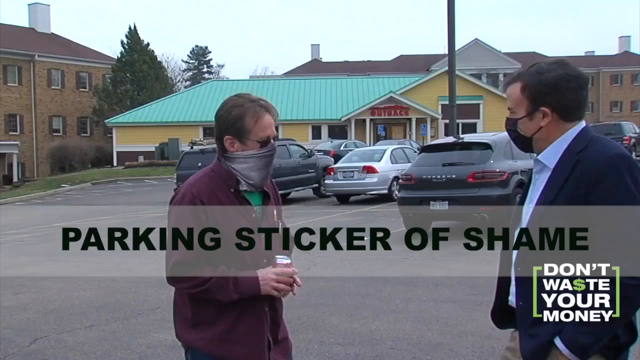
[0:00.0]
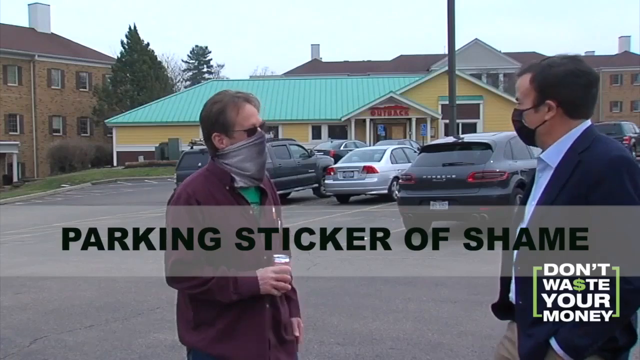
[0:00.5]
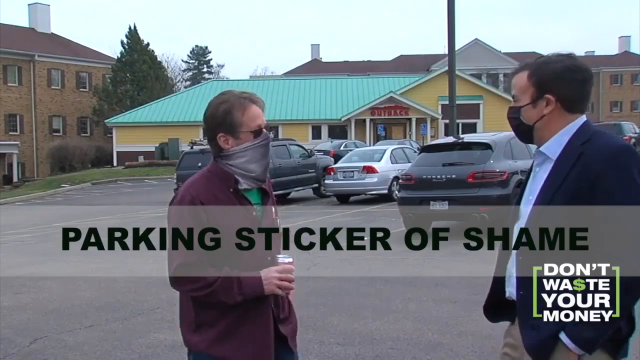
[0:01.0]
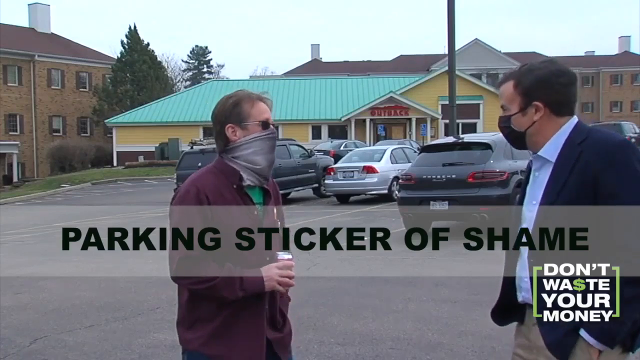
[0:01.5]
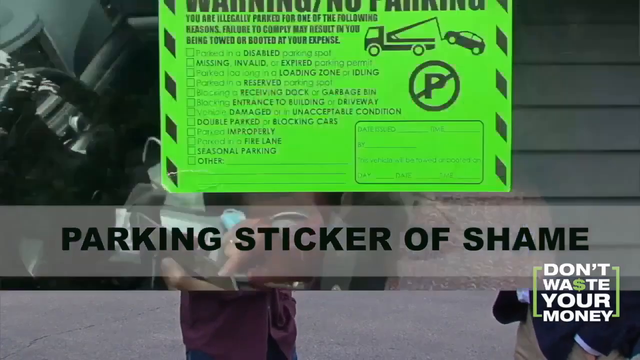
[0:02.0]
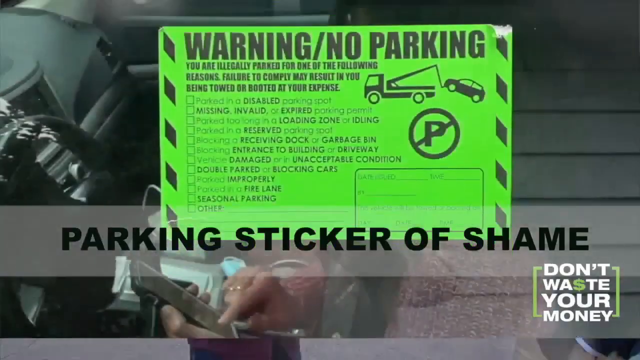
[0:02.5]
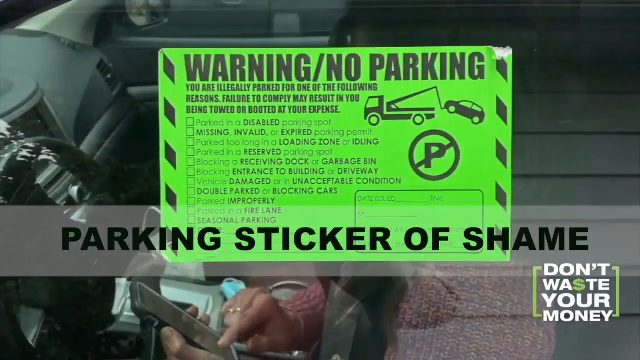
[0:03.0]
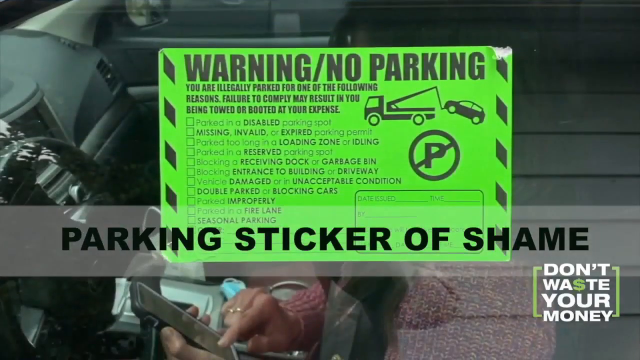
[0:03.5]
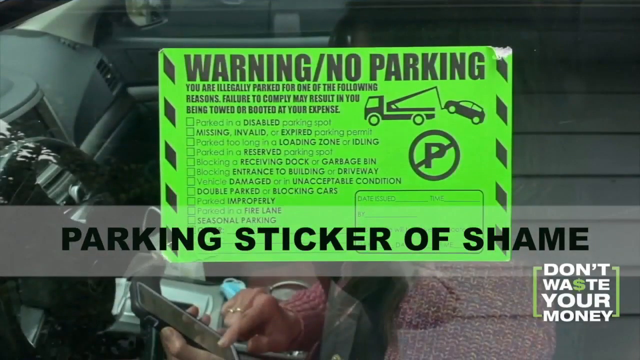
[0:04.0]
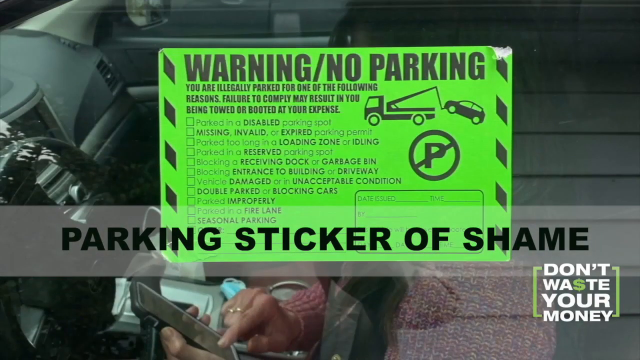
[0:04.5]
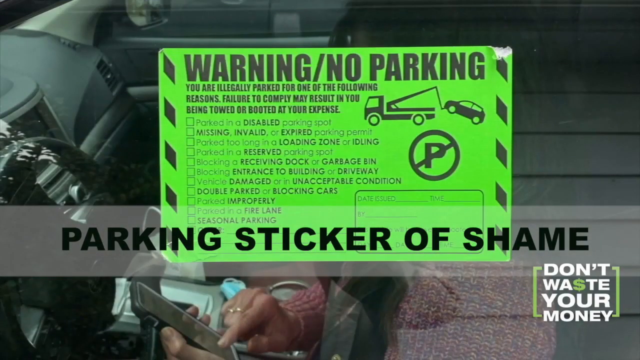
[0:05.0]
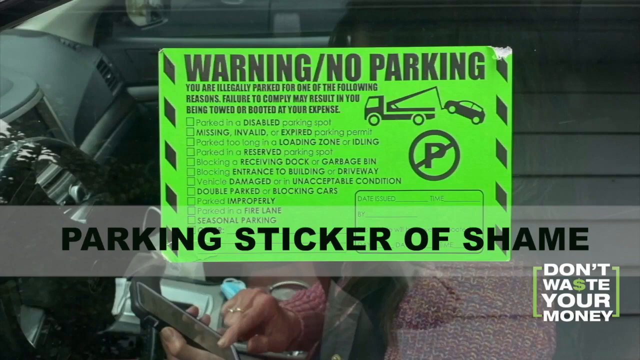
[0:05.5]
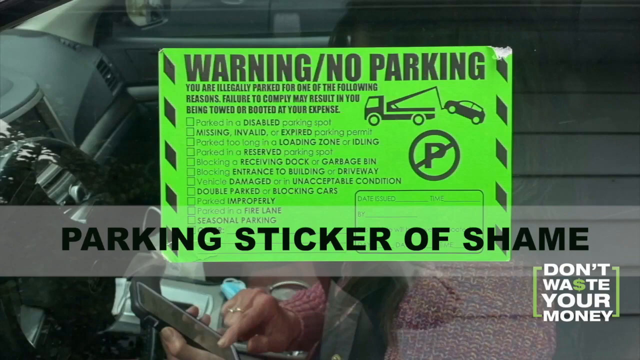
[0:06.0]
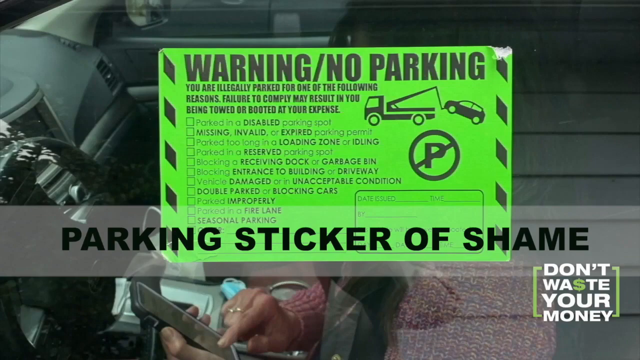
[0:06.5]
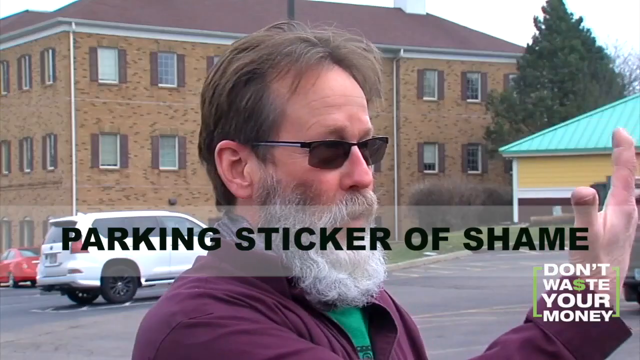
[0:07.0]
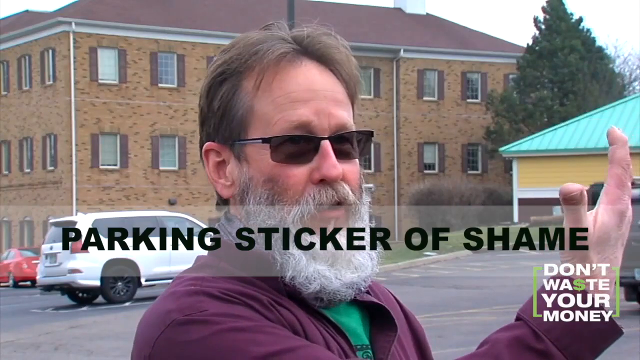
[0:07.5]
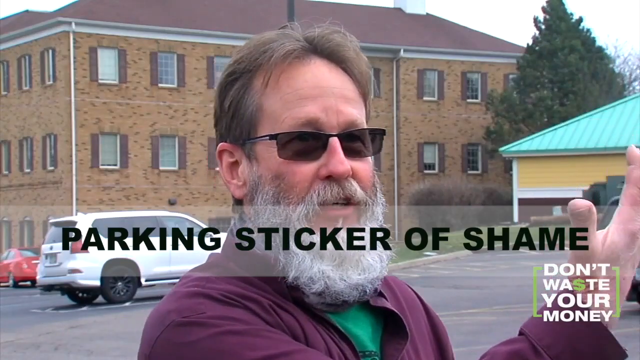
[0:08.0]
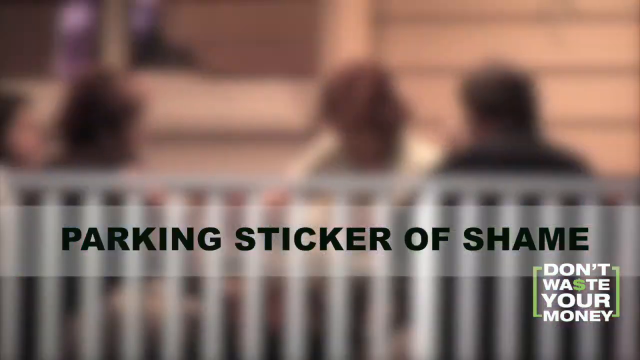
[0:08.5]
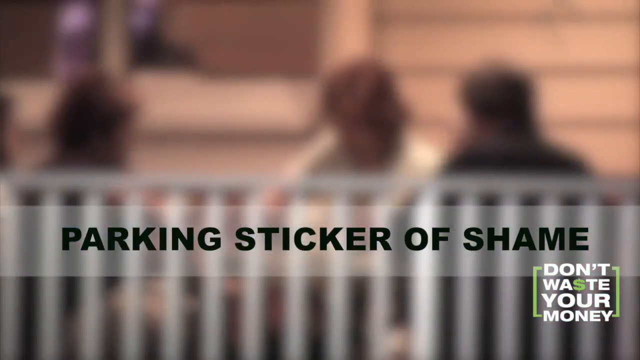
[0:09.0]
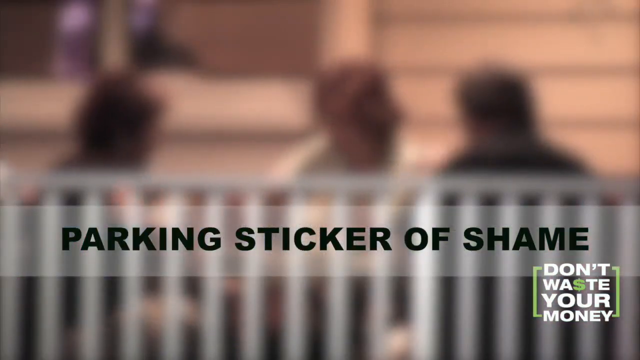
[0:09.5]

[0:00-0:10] A transparent text bar across the middle of the screen displays the text "Parking Sticker of Shame." In the lower right corner is a logo that says "Don't Waste Your Money," with the S in "waste" shown as a dollar sign. Behind this are images of two men standing in a parking lot in front of an Outback Steakhouse; they appear to be talking to each other, and both wear masks on their faces. Between these shots is a close-up of a no-parking decal placed on a car. It is green and shows a graphic of a car being towed away.